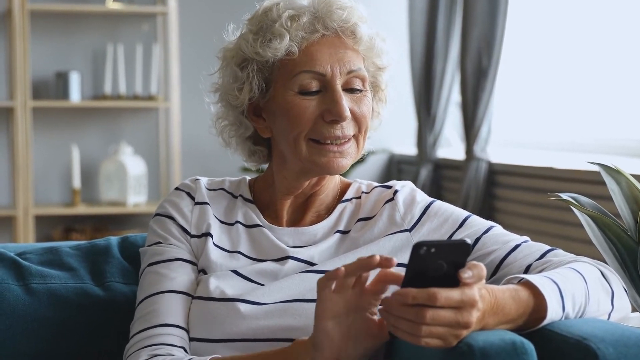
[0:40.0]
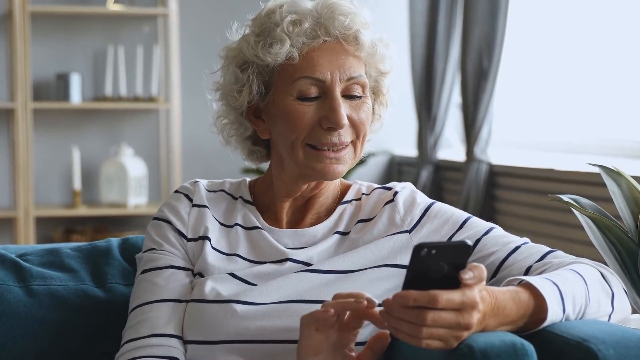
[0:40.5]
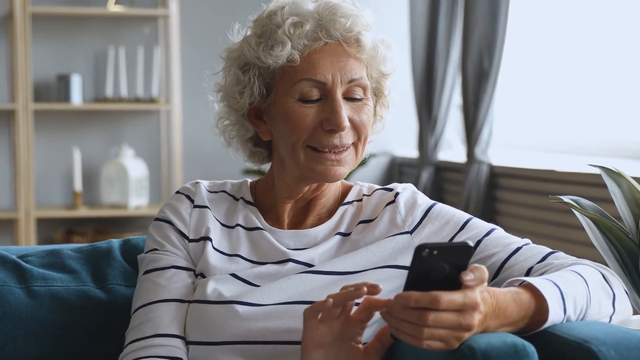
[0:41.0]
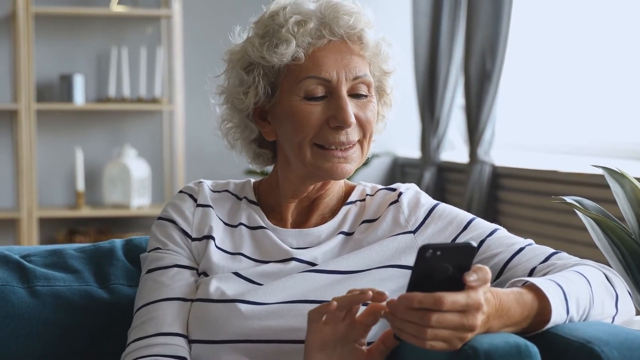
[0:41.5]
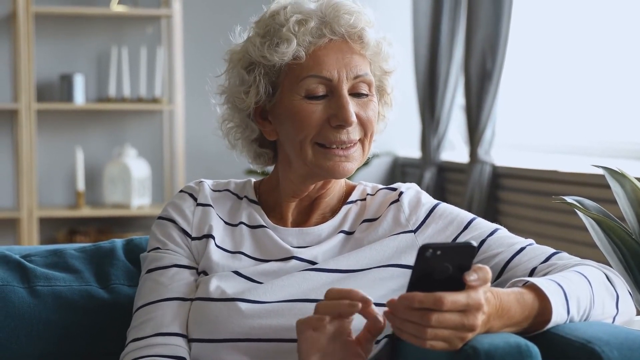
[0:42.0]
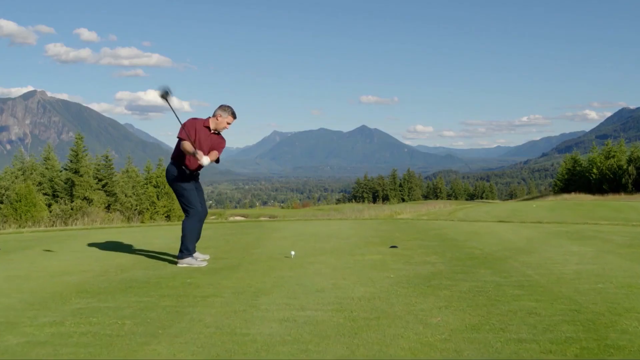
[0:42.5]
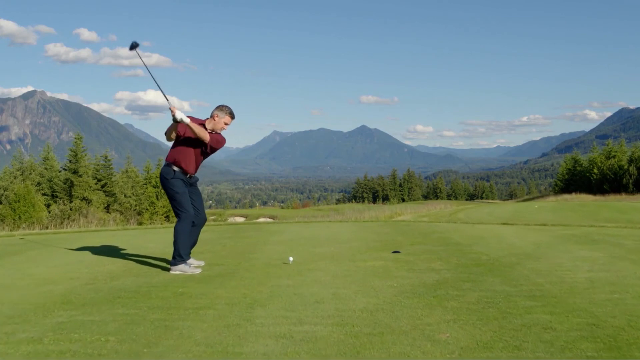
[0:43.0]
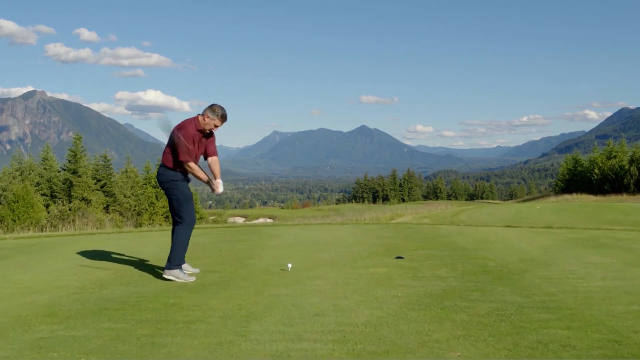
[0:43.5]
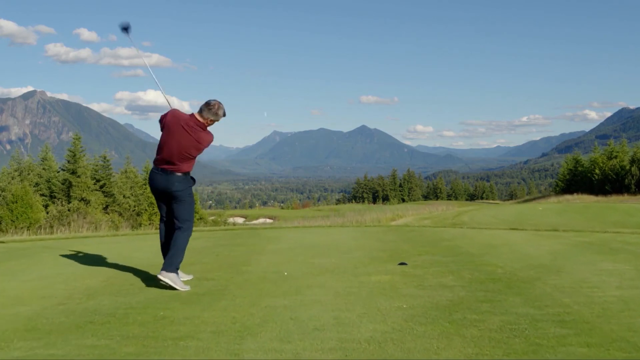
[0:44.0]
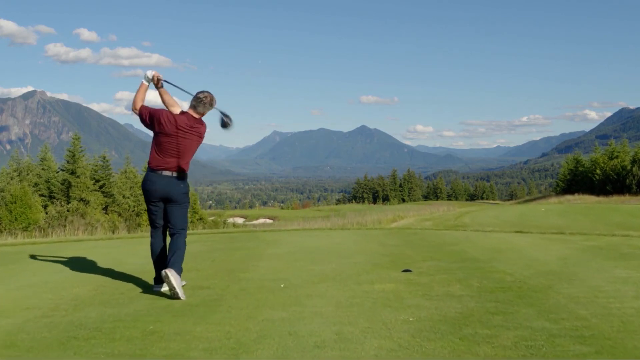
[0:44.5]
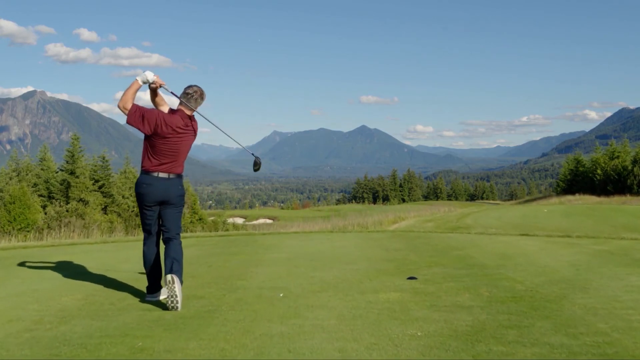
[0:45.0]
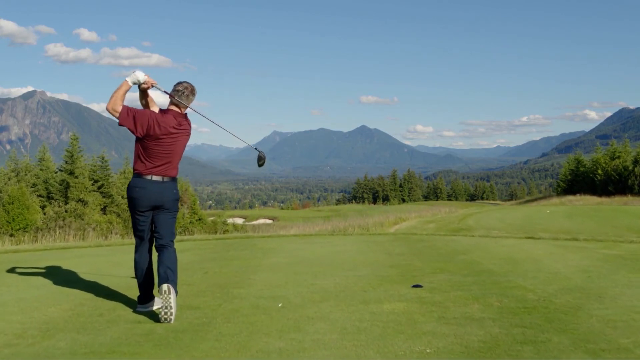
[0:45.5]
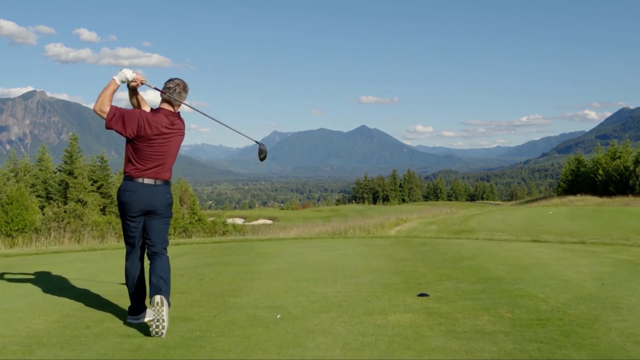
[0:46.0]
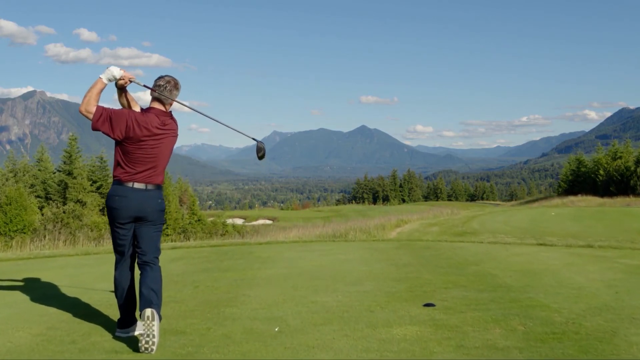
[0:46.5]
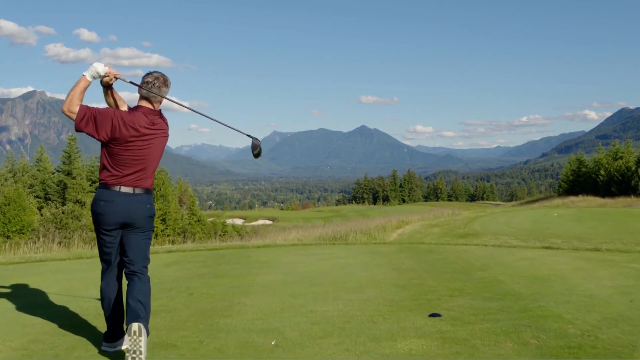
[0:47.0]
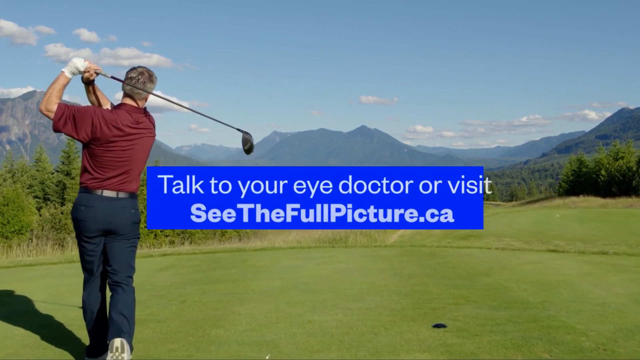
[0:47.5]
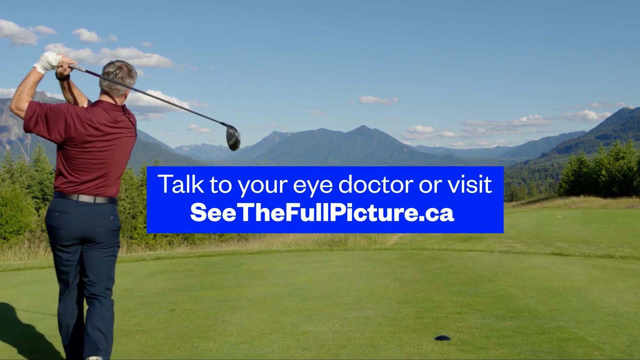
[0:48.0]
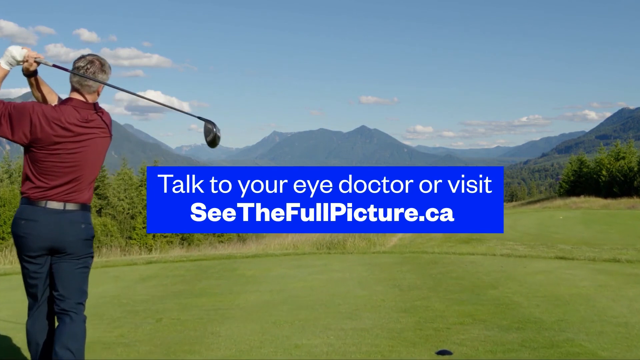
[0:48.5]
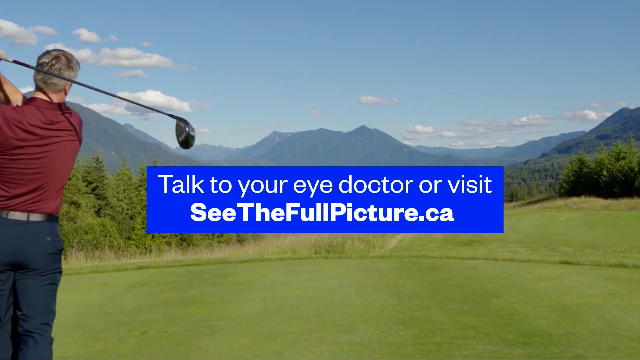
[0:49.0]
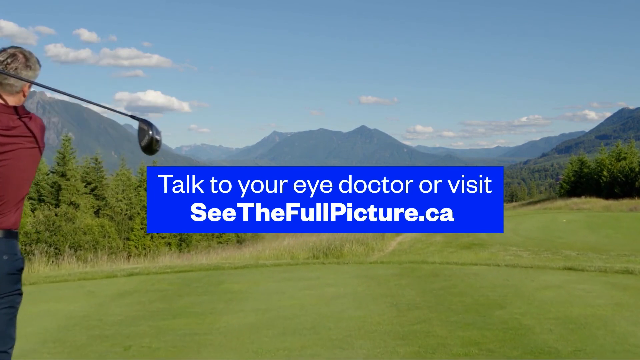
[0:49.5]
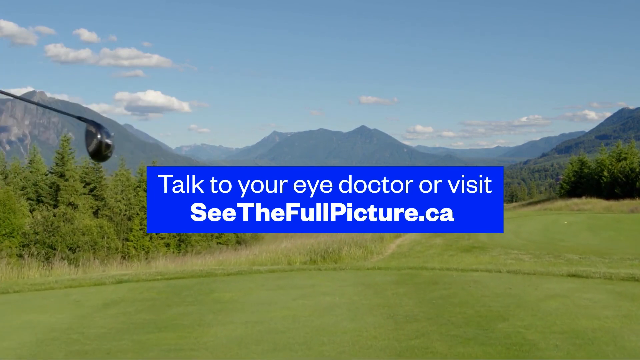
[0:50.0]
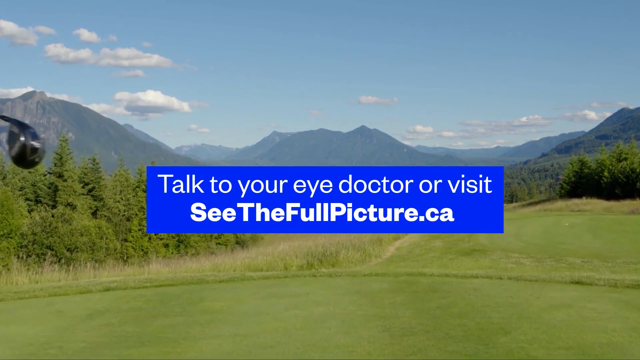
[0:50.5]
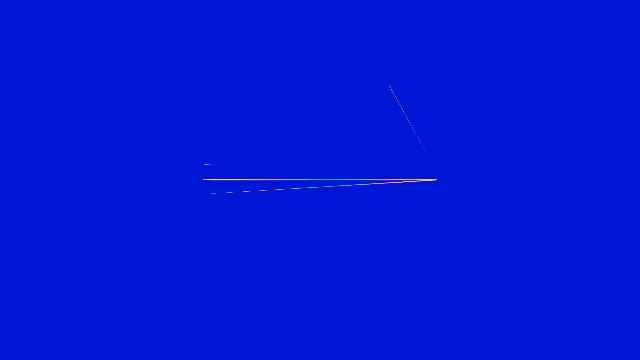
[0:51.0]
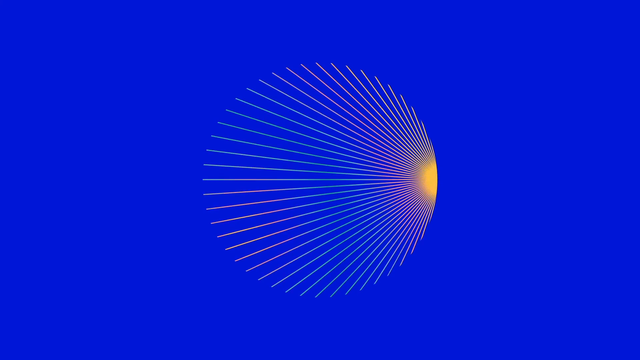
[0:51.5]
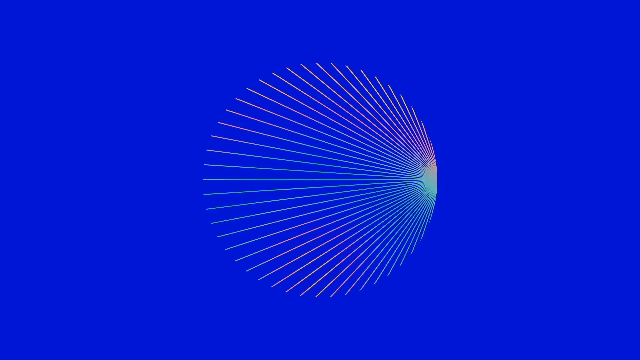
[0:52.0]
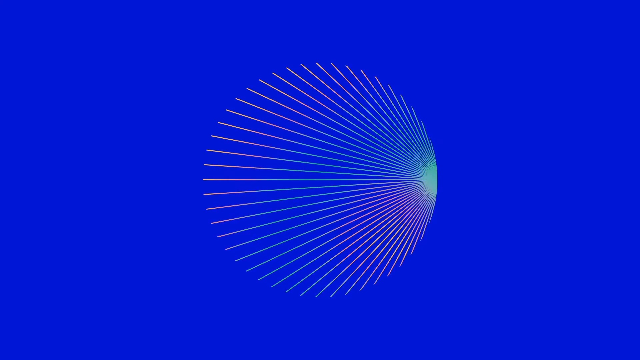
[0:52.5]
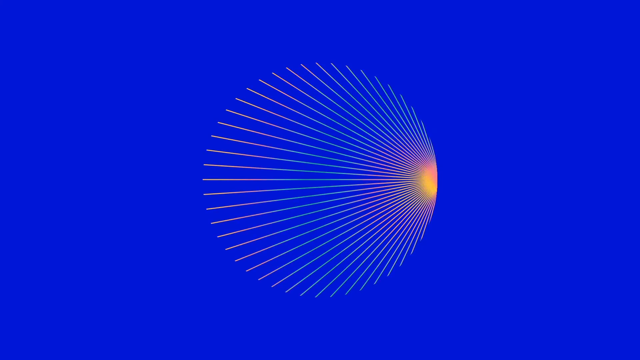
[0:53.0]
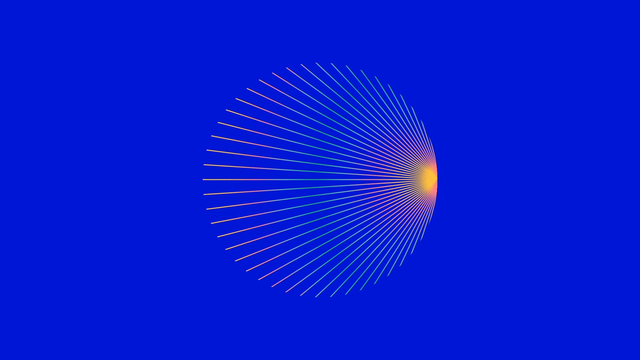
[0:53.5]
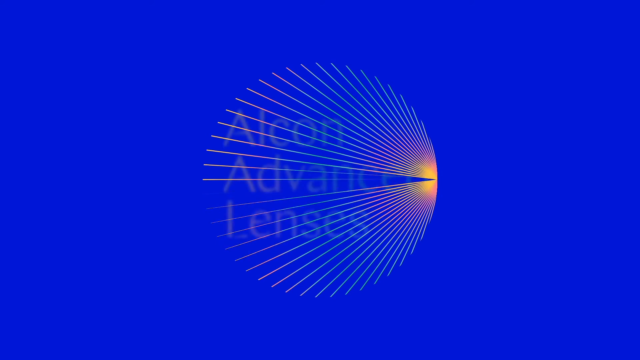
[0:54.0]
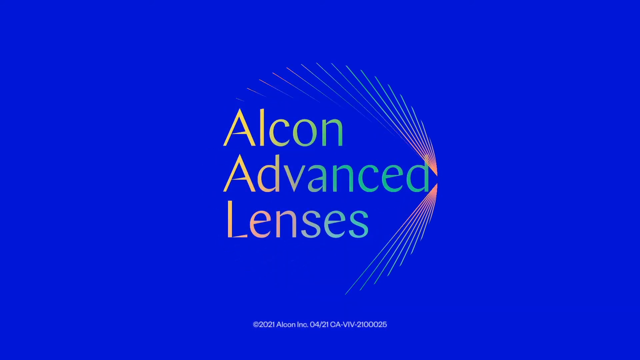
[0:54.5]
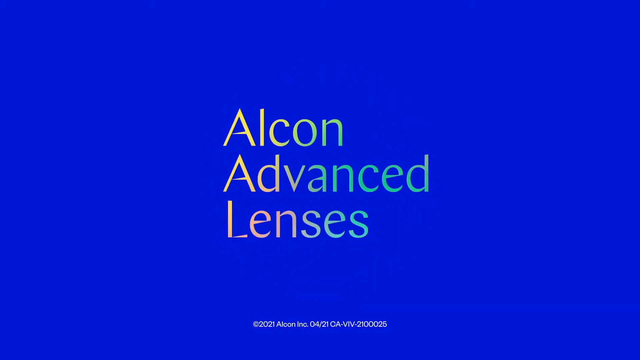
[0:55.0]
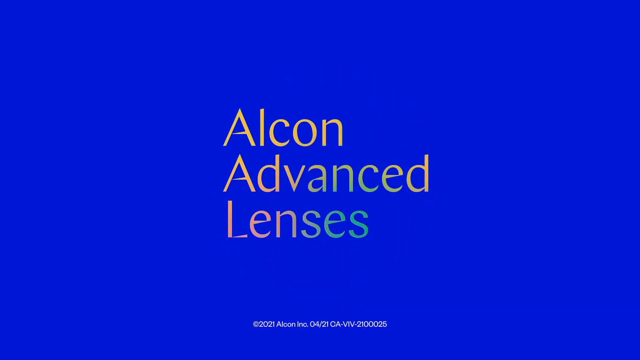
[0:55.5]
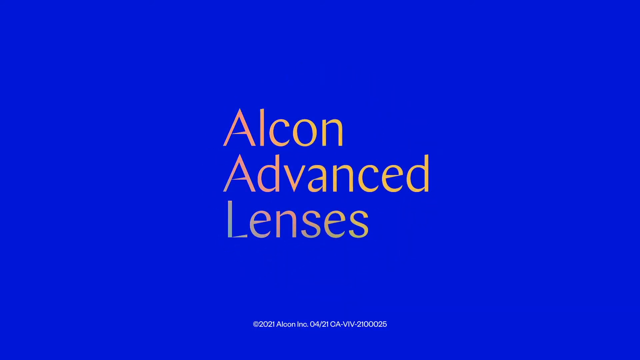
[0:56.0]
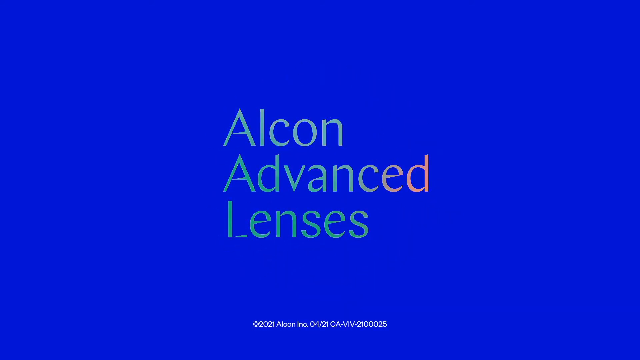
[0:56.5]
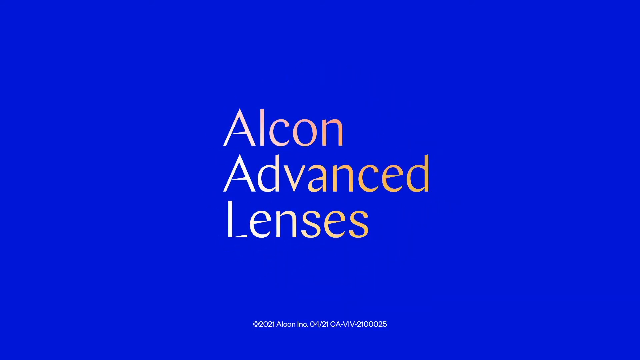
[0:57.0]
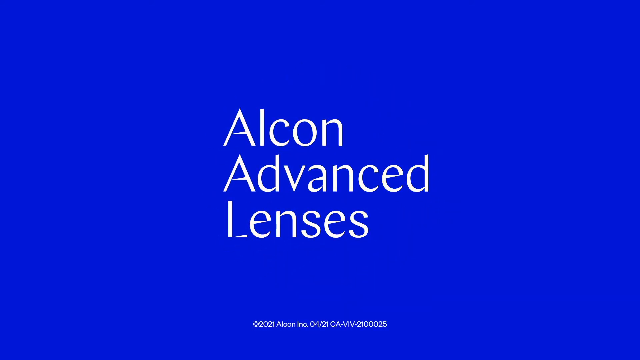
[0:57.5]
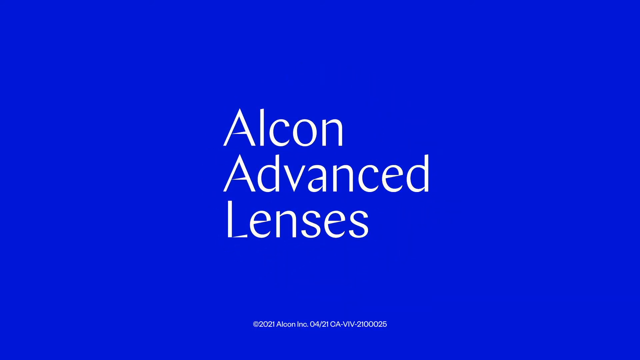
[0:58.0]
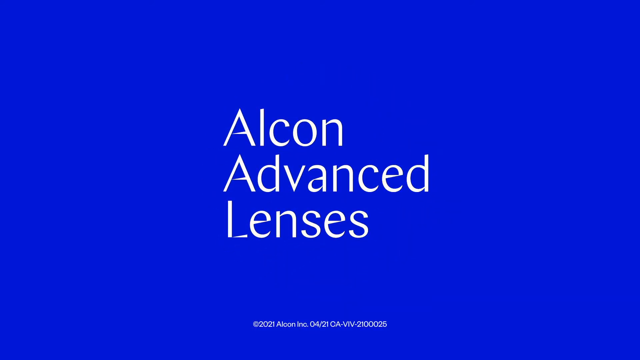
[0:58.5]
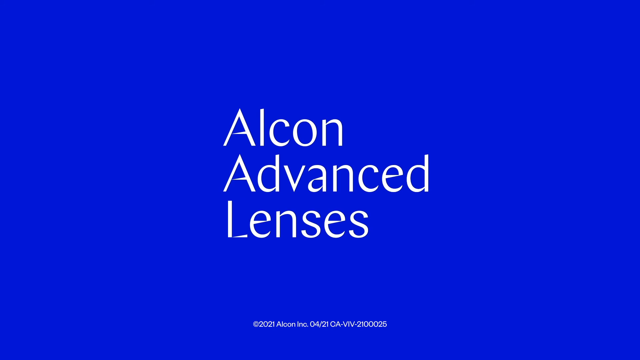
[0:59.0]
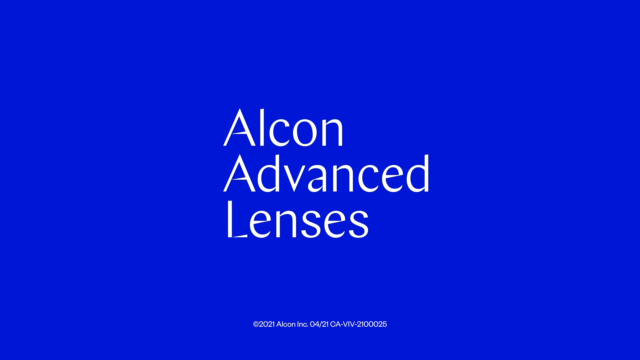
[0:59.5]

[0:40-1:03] The woman texts with her right index finger; the light wood-colored shelf behind her holds some candles and random trinkets. The next shot shows an older man playing golf on a golf course, wearing a maroon polo, white gloves, blue pants and a belt. As he hits the ball, the camera slightly zooms in to pan toward where the ball went, heading toward the mountain. This is overlaid with a blue box with white text reading "To talk to your eye doctor or visit seethefullpicture.ca". At the end, "Alcon Advanced Lenses" appears on a blue background, the text in what looks like a rainbow gradient that turns white. At the bottom it says "2021 copyright alcon incorporation", along with what appears to be a serial or identification number.